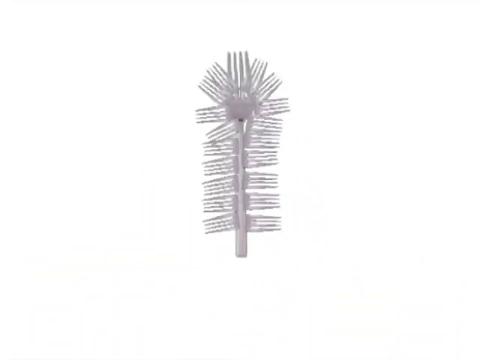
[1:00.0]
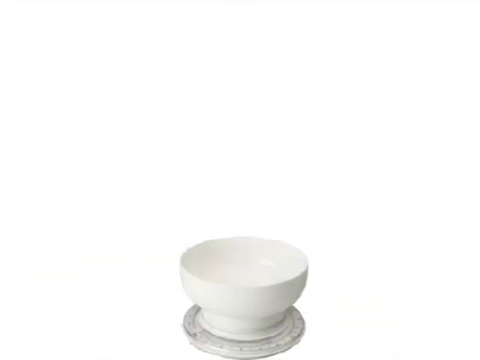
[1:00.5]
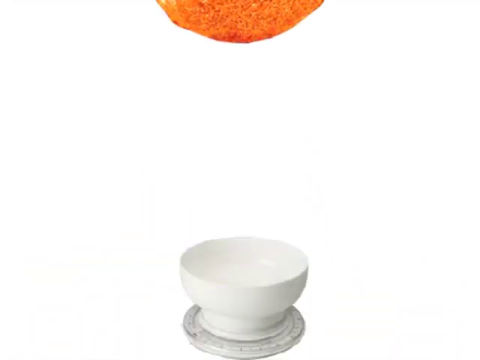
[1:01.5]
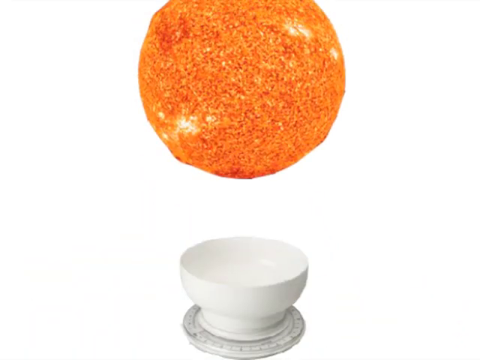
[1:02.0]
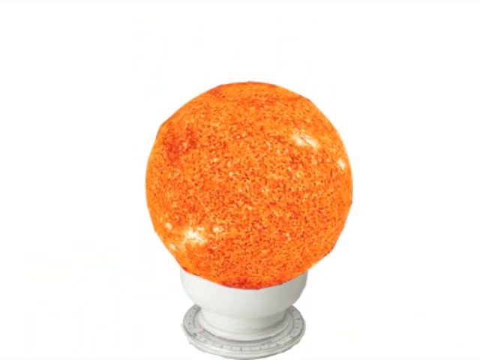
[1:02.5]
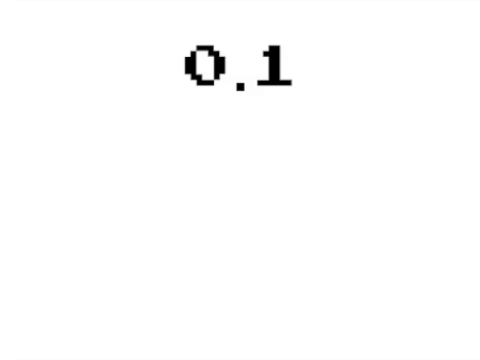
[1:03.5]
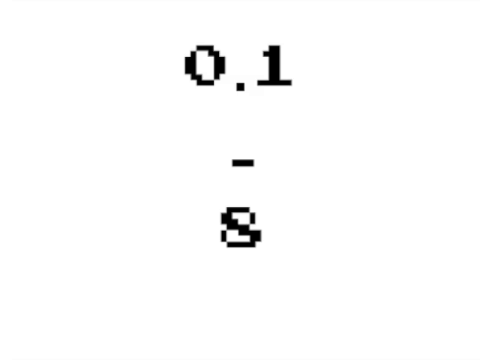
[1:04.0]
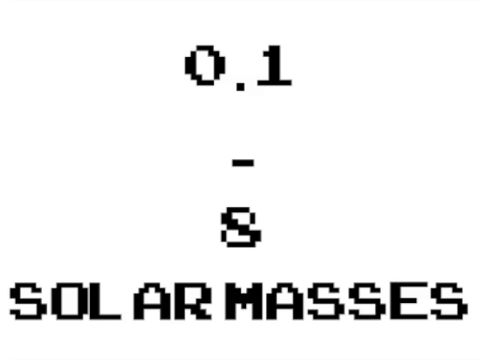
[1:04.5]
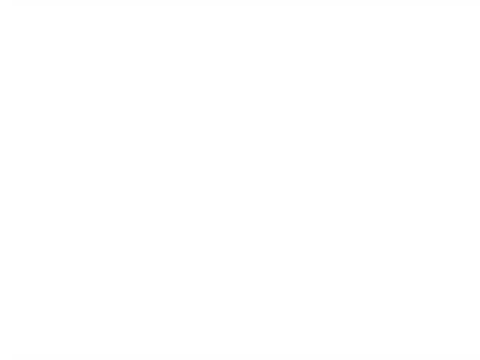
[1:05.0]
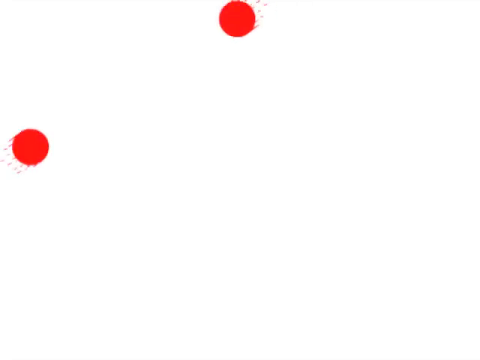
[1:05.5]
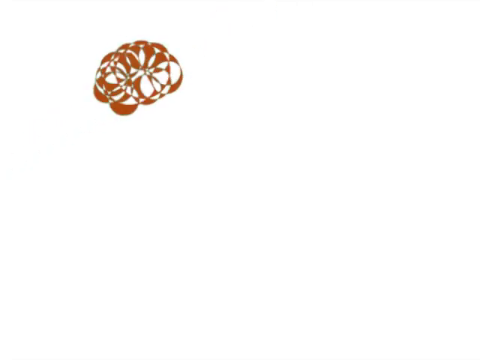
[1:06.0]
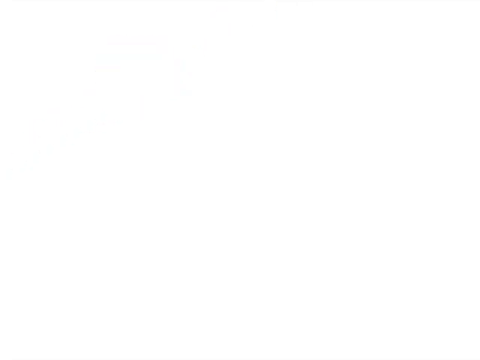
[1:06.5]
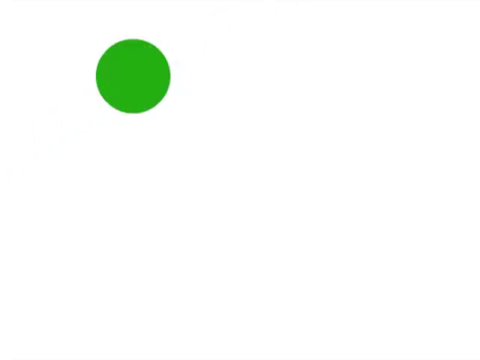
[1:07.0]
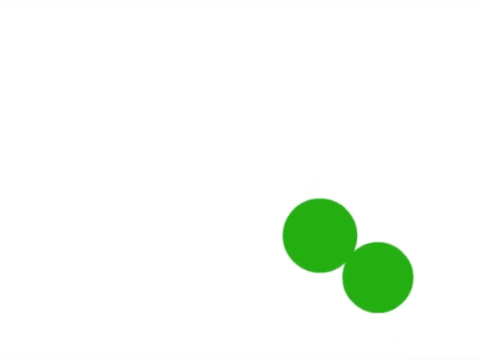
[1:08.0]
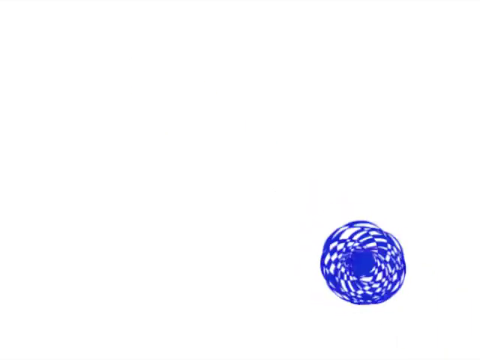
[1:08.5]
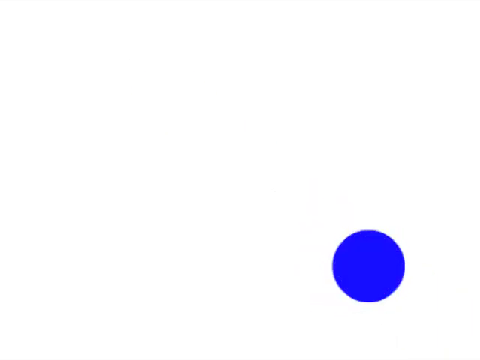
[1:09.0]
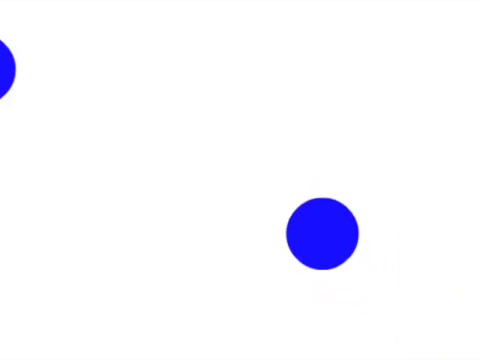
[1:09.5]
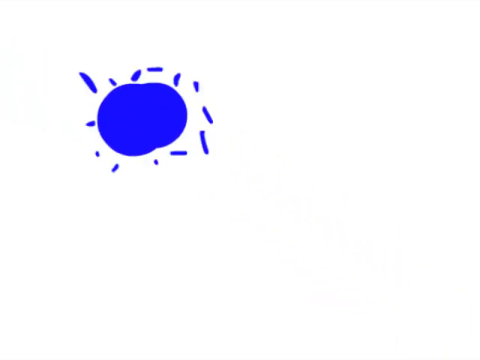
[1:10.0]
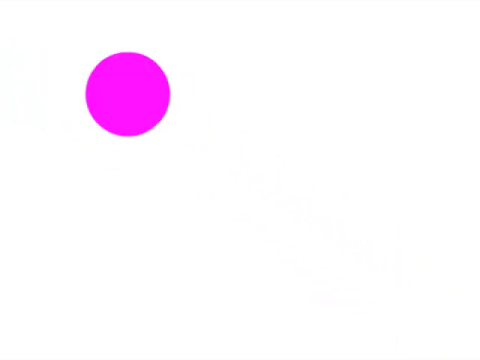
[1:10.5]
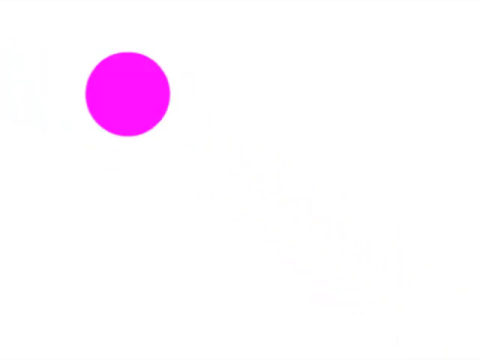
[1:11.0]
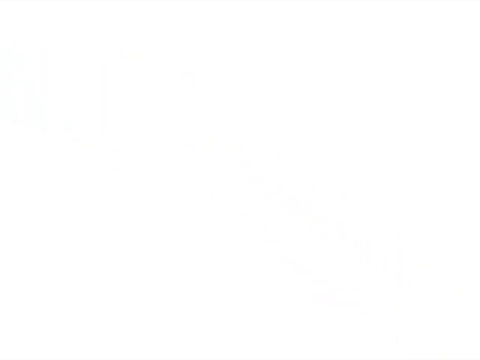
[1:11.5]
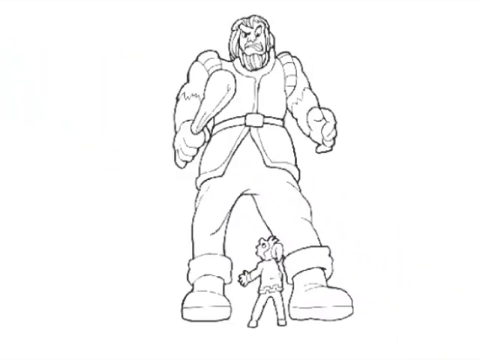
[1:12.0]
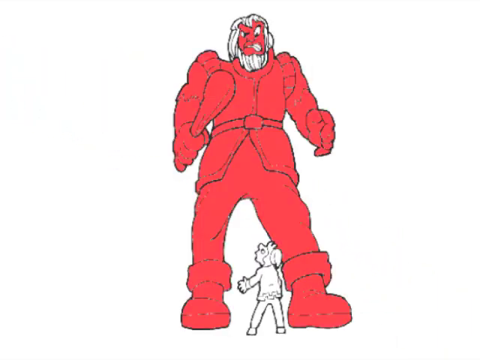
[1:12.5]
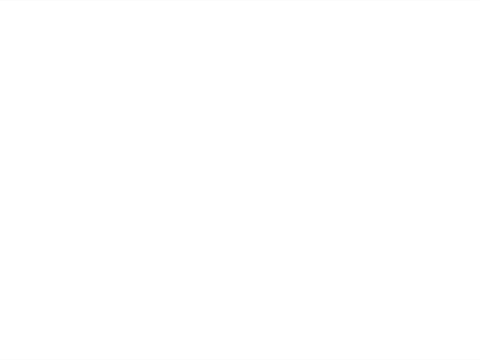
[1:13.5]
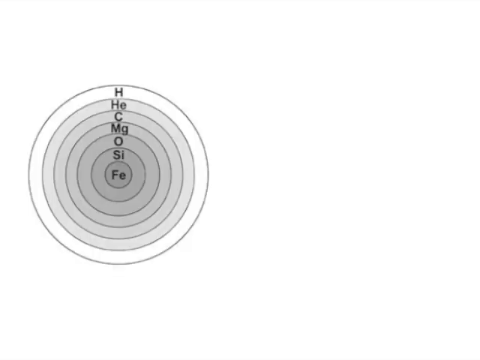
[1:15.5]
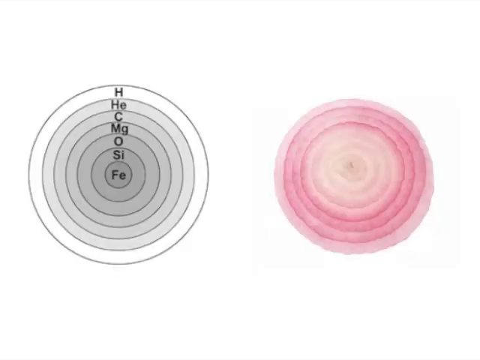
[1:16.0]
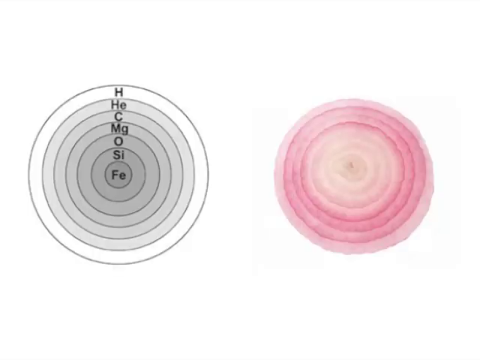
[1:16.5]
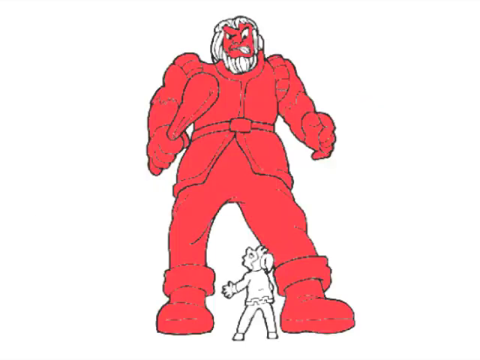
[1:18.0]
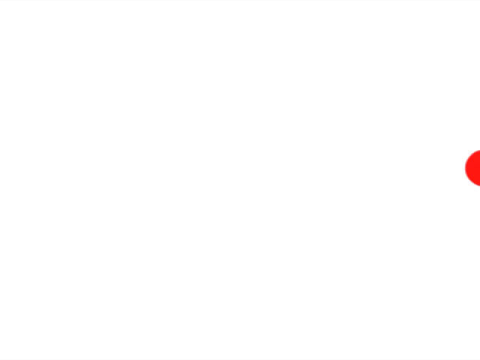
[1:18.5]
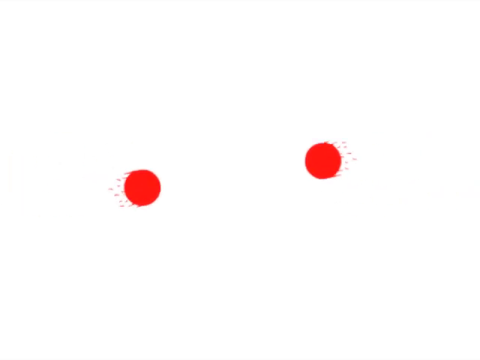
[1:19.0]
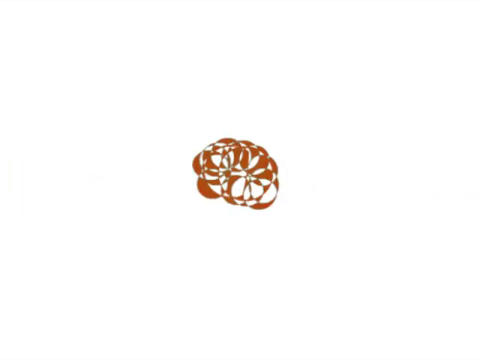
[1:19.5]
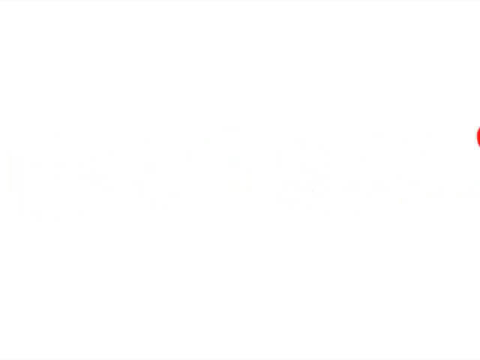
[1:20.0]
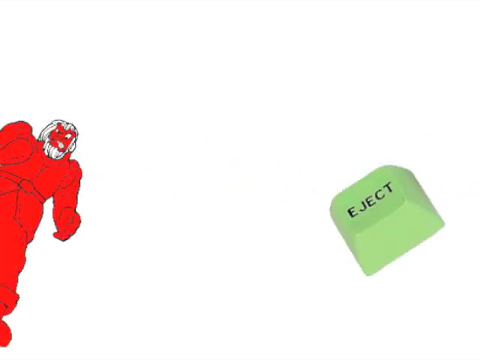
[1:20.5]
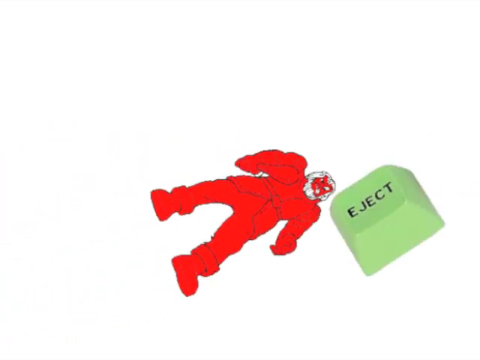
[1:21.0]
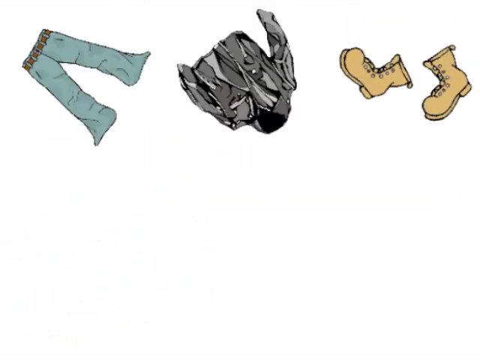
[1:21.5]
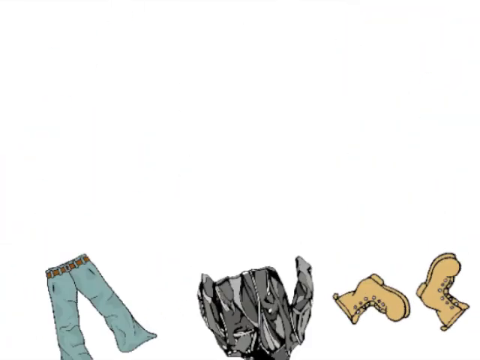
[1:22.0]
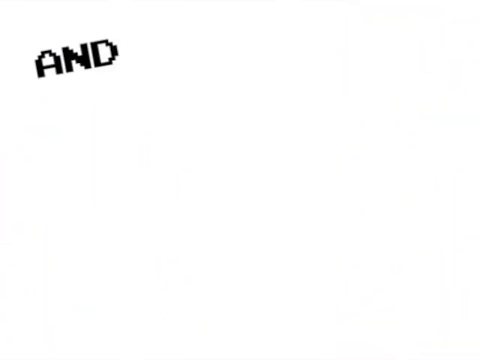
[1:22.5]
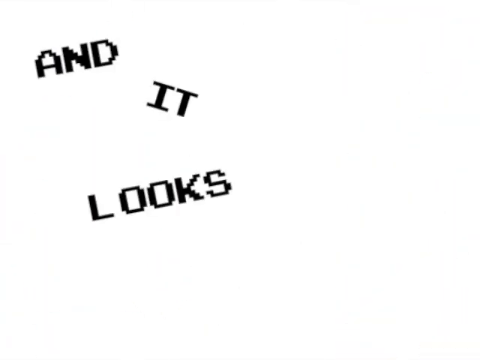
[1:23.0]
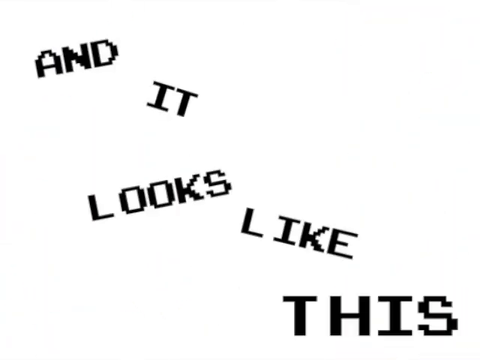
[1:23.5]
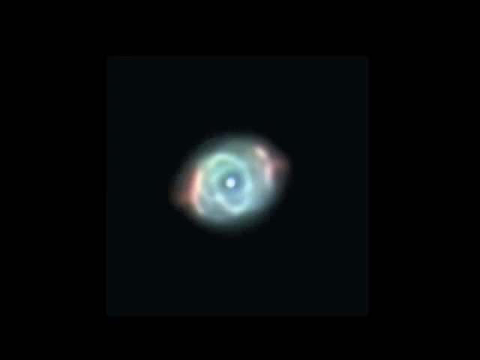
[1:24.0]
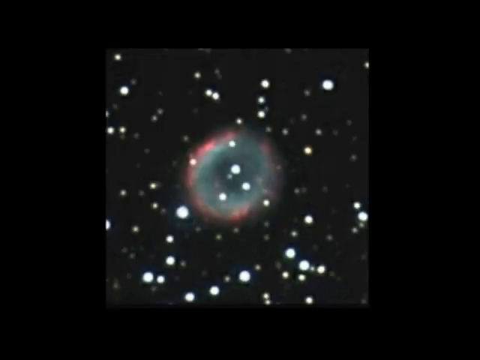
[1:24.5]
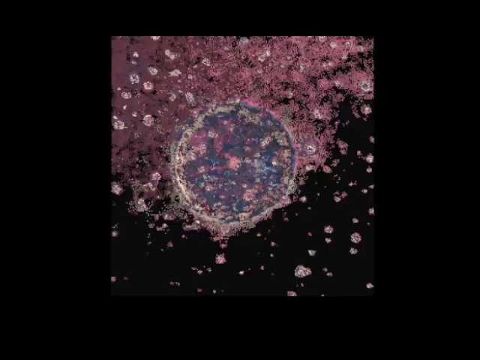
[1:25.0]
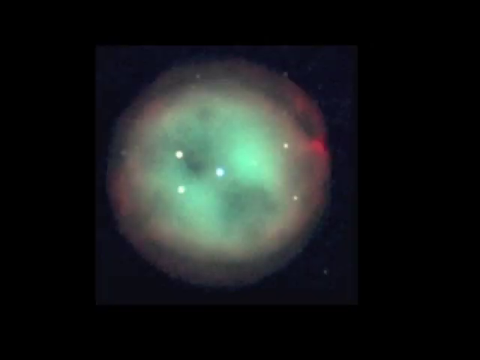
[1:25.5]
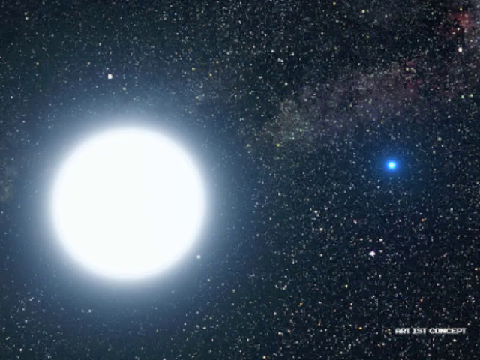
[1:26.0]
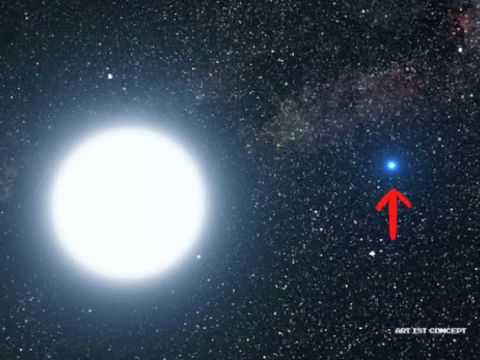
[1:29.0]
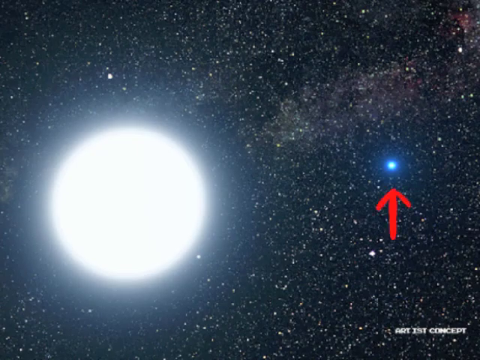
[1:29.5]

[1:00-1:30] The tip of the fork, the spiky part used to pick up food, is shown, with the fork in the middle of a white background. A white bowl appears, and the orange circle that looks hot falls into it. Black text appears and disappears, reading "0.1-8" with "solar masses" underneath. Two red balls form together on the upper left-hand side and turn green. Two green balls form together on the lower right-hand side and turn blue. Two blue balls form together on the upper left-hand side and turn a pinkish-purple colour. They disappear, and a red giant appears. A circle with element symbols appears: Fe, Si, O, Mg, C, He and H, apparently including hydrogen, helium, carbon, magnesium, oxygen and possibly silicon. The red giant then hits a green button that says "eject," and clothes such as pants and beige boots fall. An orb then appears.